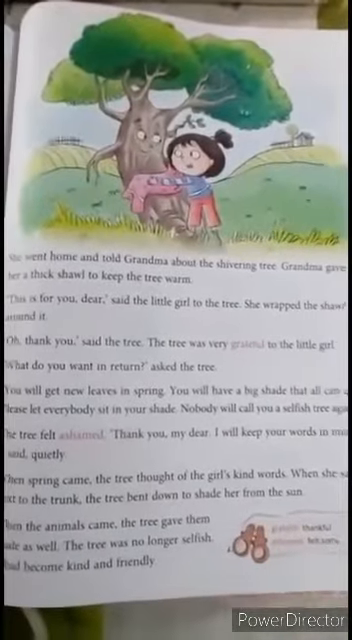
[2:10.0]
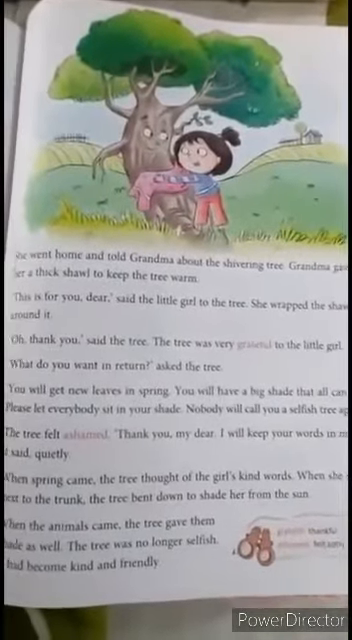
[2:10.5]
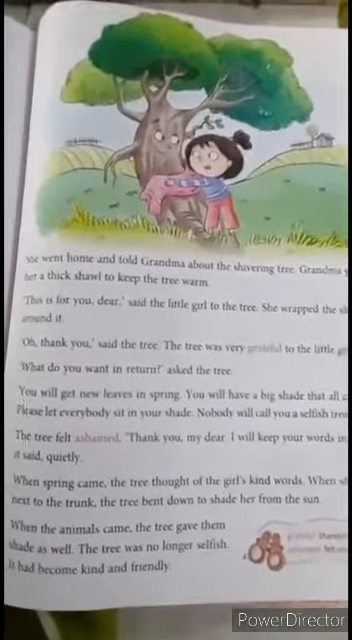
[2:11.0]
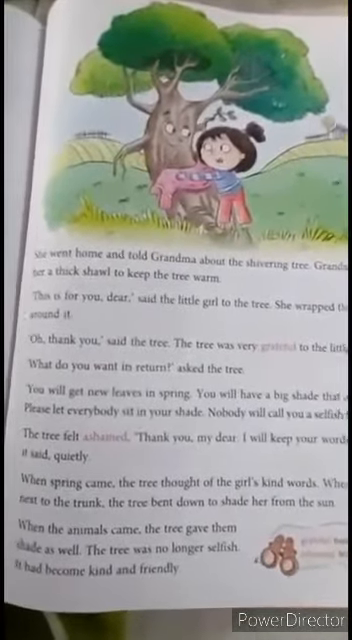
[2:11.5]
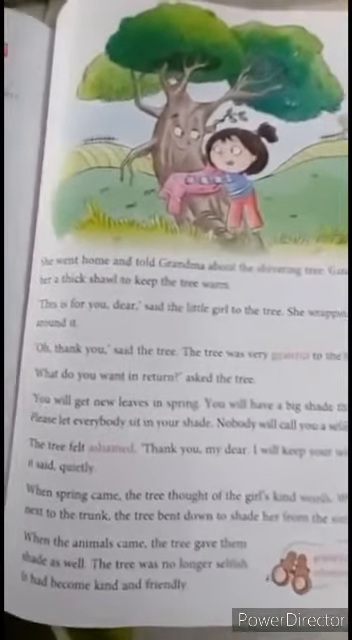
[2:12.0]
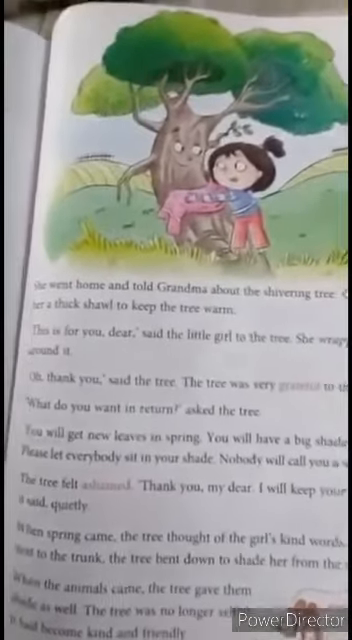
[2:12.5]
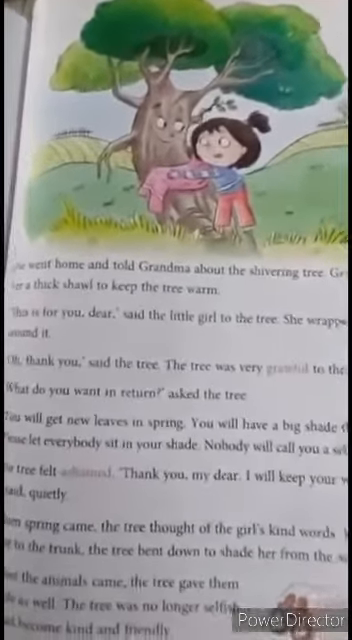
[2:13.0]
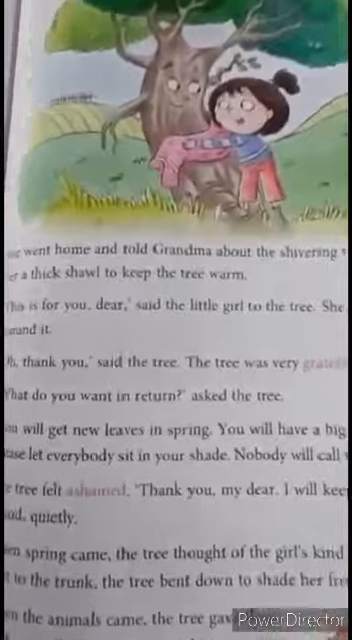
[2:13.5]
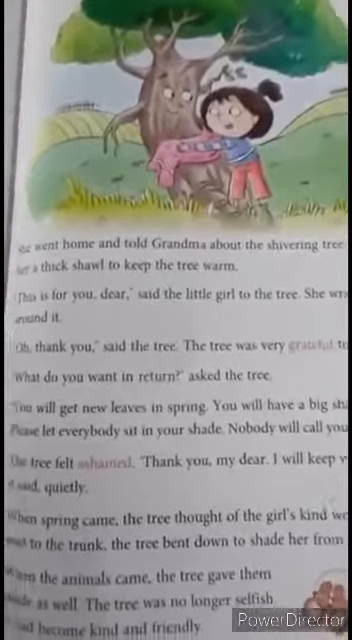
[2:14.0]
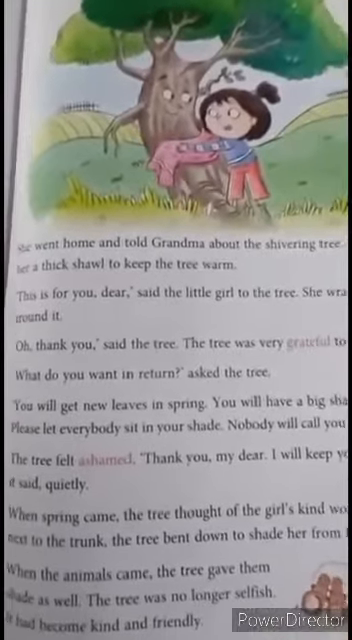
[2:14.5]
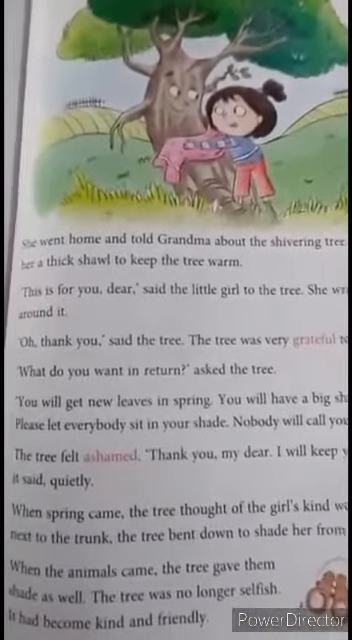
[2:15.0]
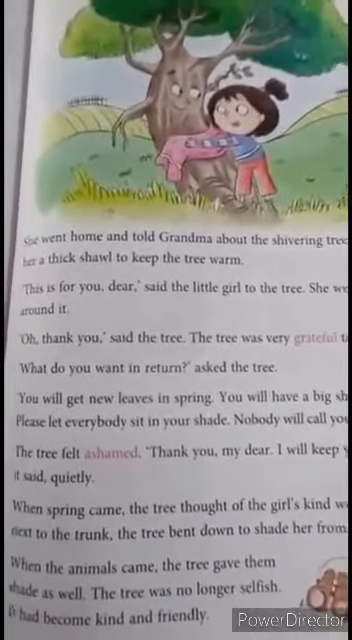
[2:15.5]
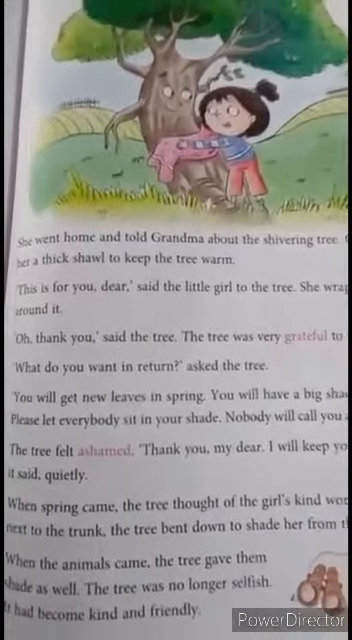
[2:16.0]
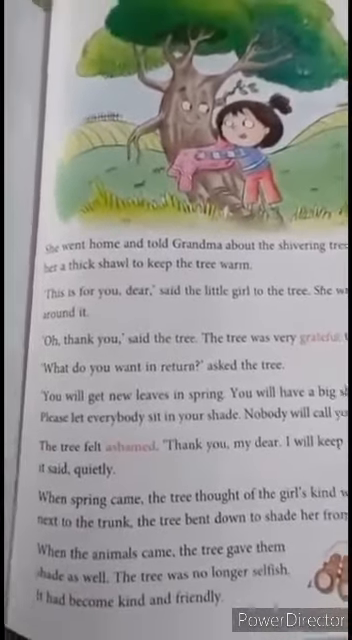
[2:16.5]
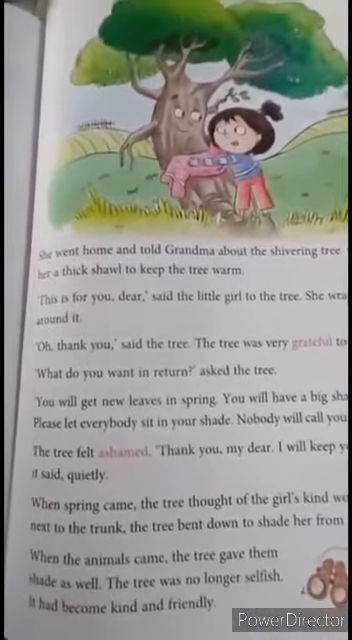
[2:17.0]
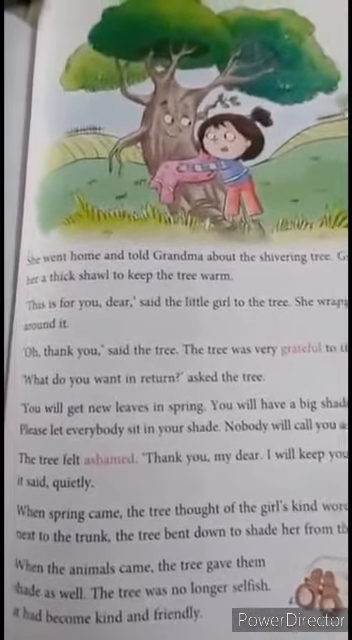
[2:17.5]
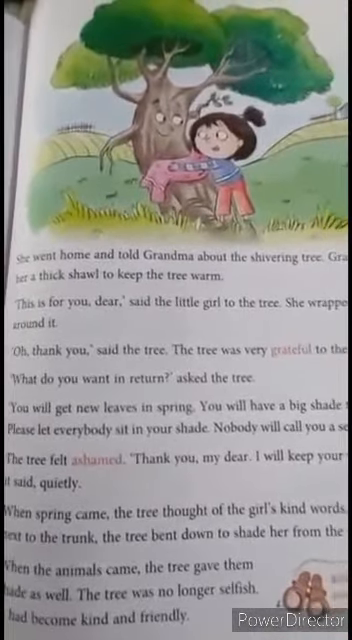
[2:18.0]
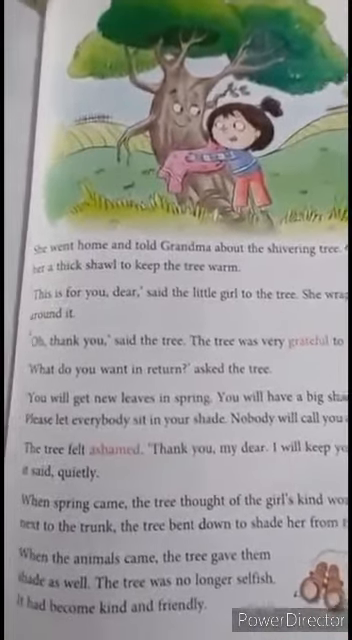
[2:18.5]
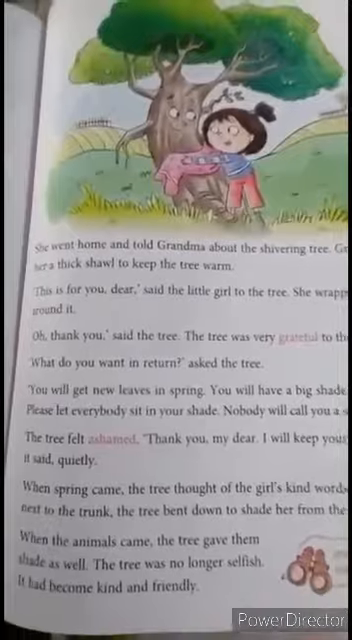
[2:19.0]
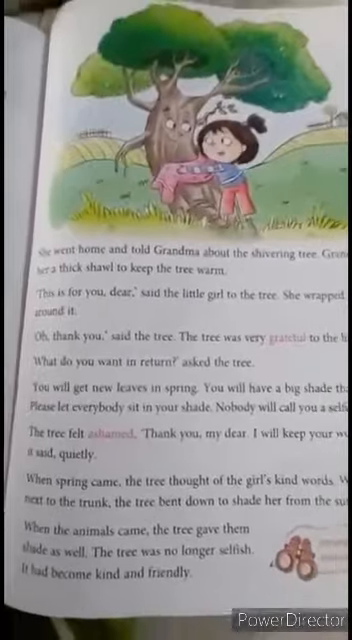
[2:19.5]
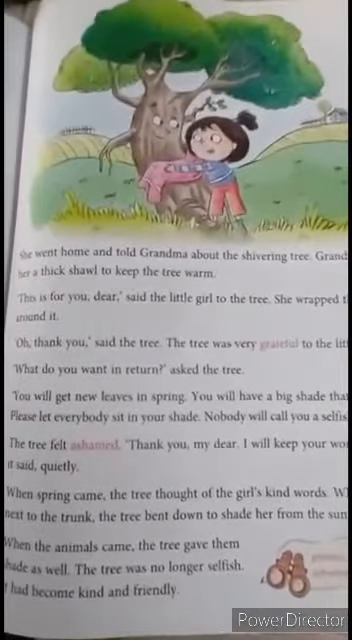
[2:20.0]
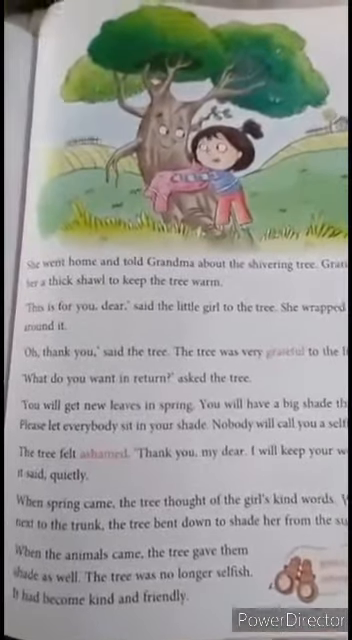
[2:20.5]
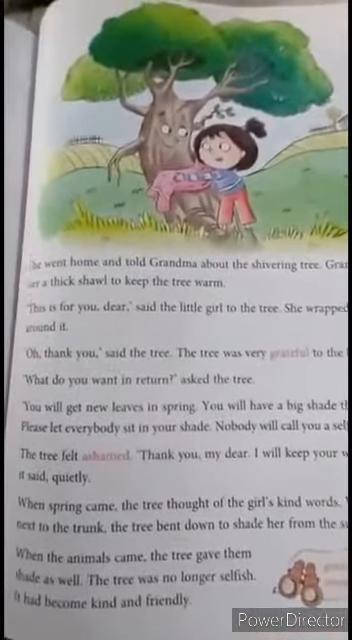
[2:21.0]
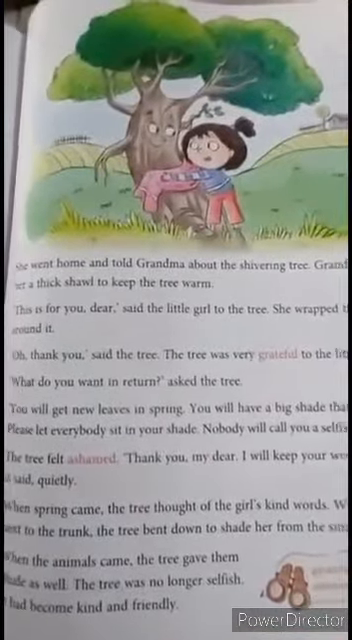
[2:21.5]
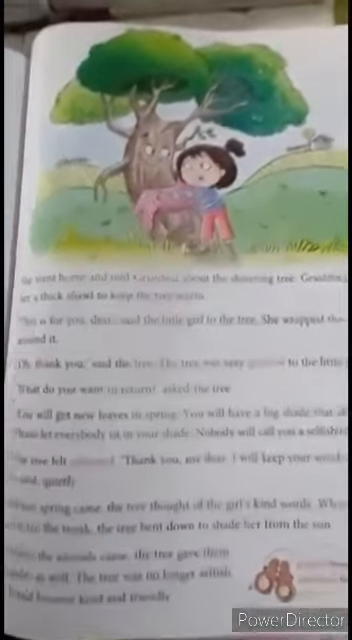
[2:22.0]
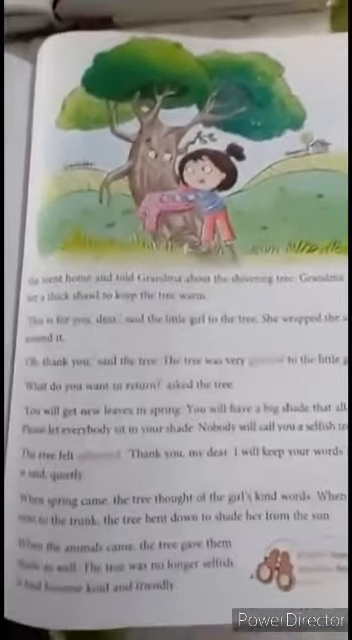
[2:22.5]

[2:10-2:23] The children's book is open to an illustrated page, with the illustration at the top and the words at the bottom. A smiling little girl looks at a tree that also has a smile, a nose and a mouth. The girl is giving the tree a pink towel. She wears a long-sleeved blue shirt and pink pants, and they are in a field.